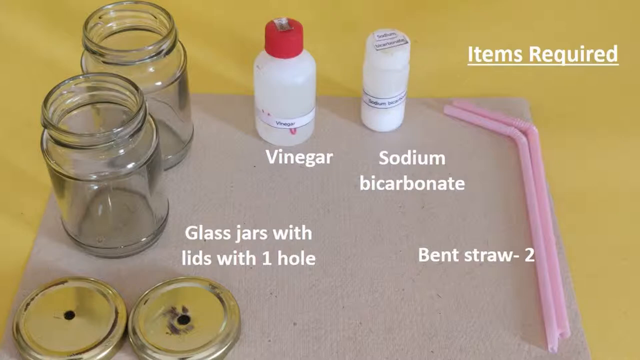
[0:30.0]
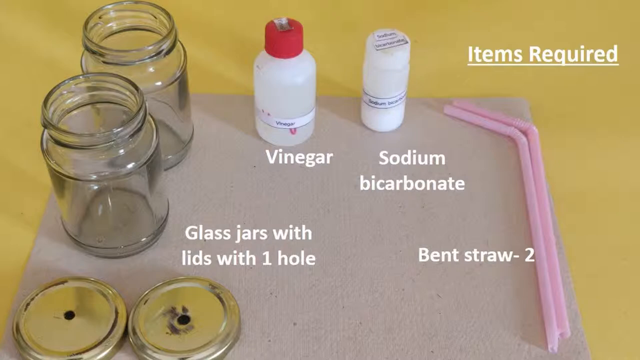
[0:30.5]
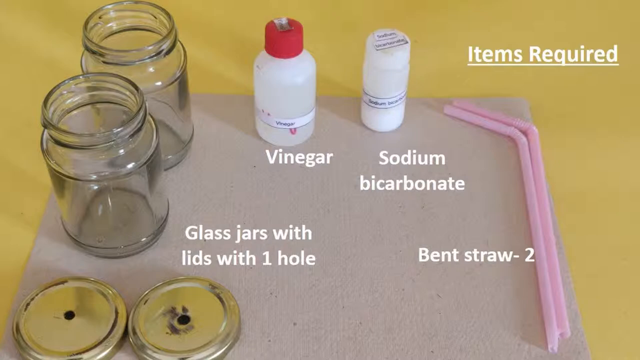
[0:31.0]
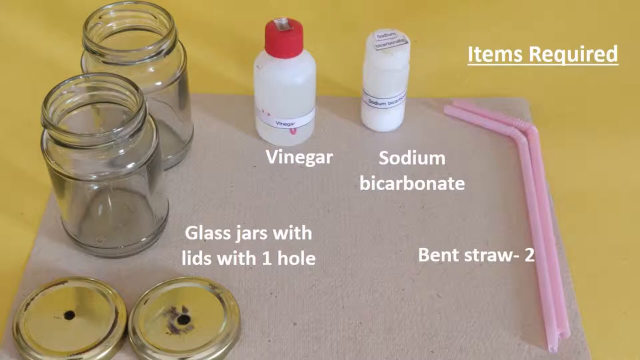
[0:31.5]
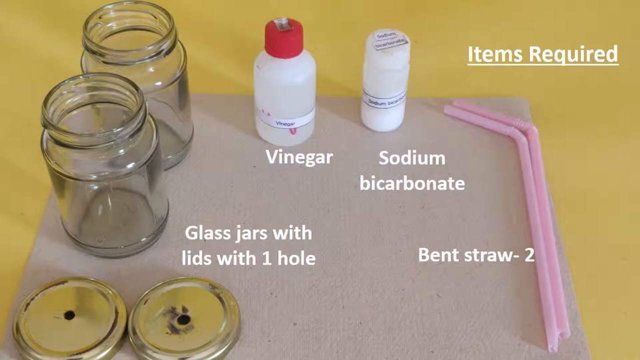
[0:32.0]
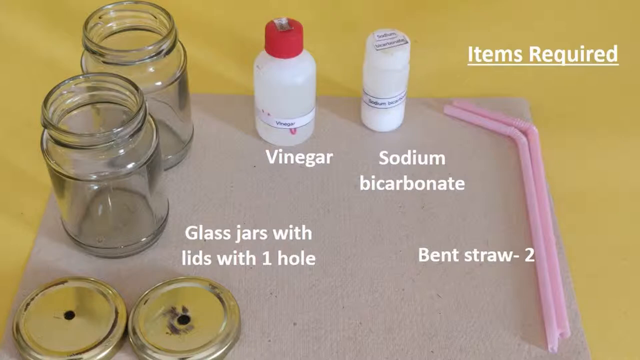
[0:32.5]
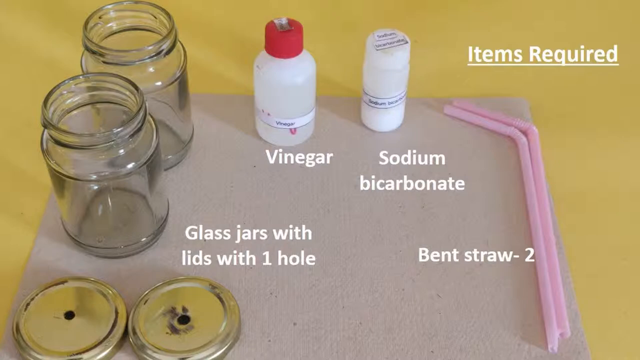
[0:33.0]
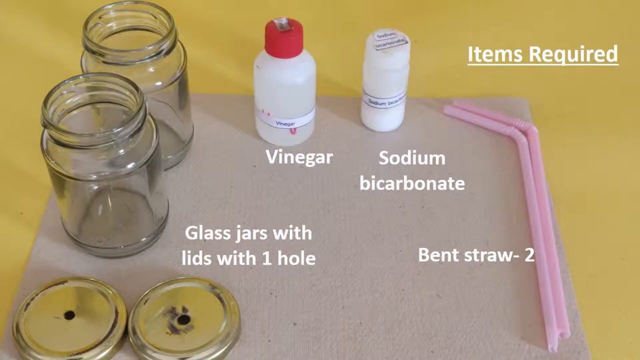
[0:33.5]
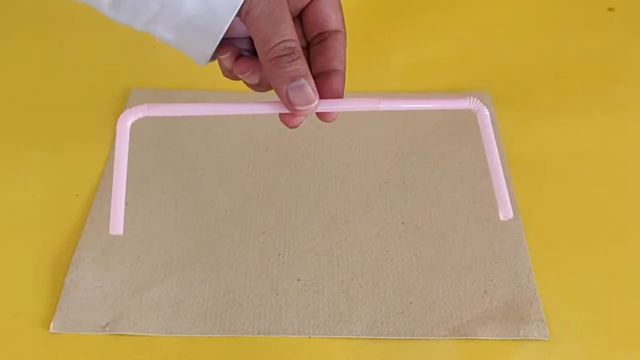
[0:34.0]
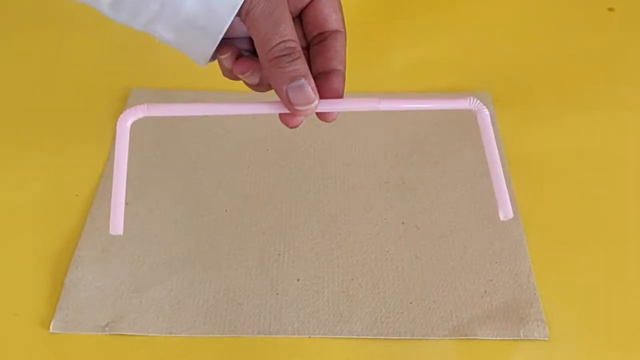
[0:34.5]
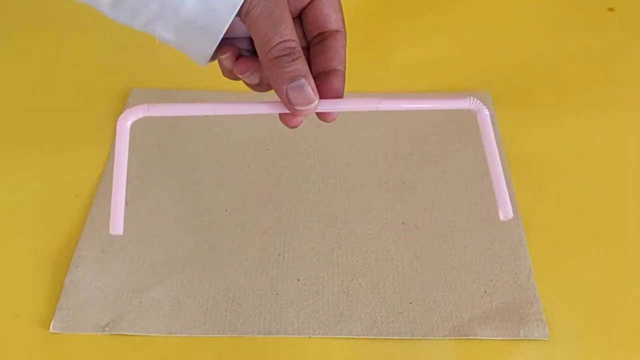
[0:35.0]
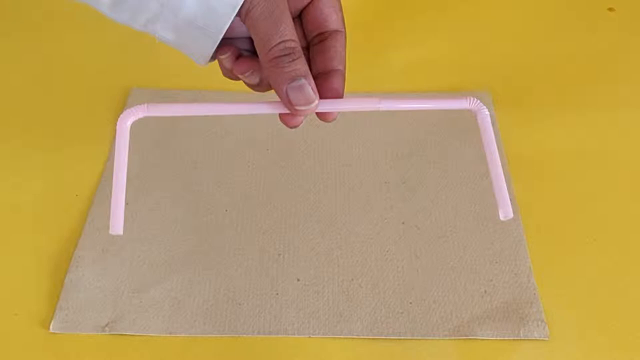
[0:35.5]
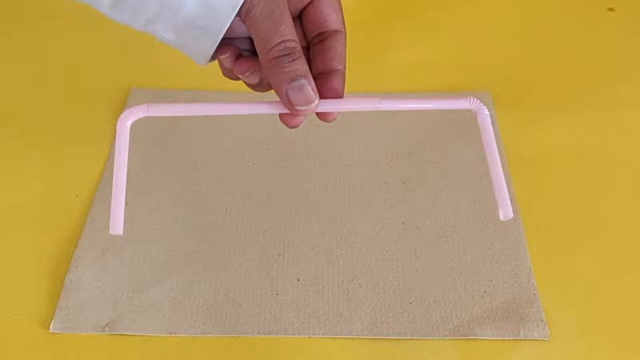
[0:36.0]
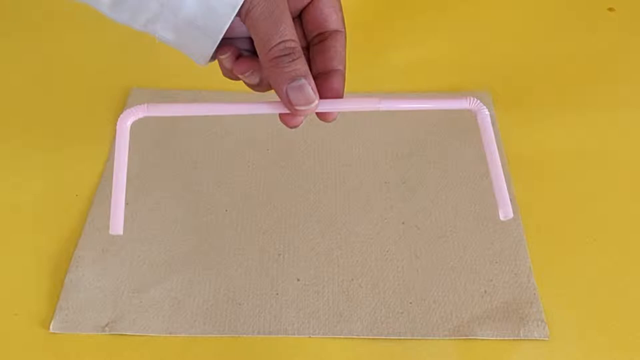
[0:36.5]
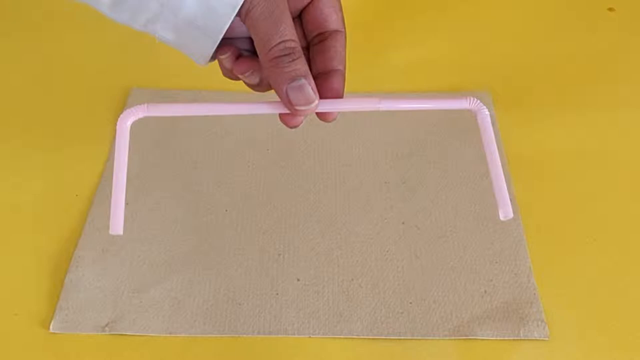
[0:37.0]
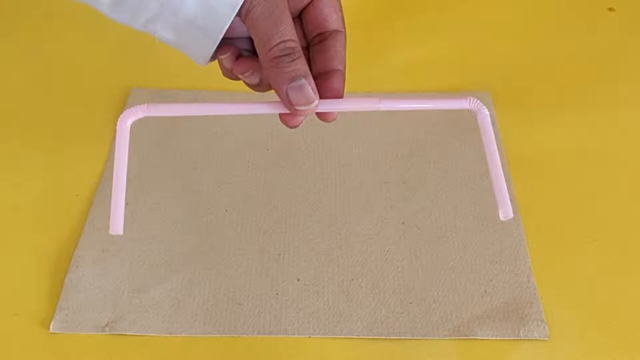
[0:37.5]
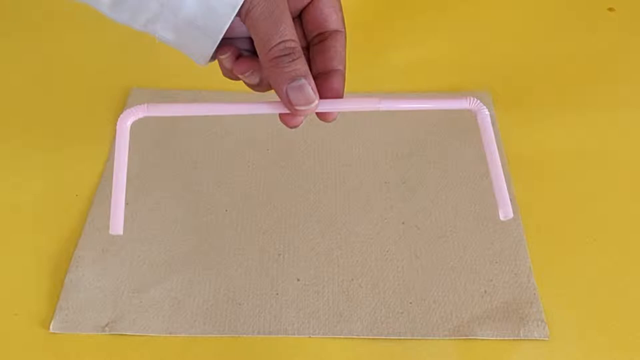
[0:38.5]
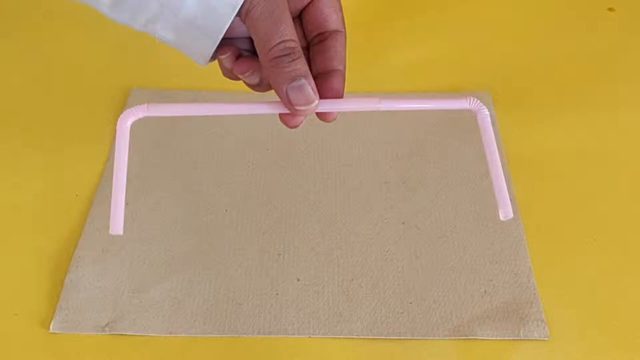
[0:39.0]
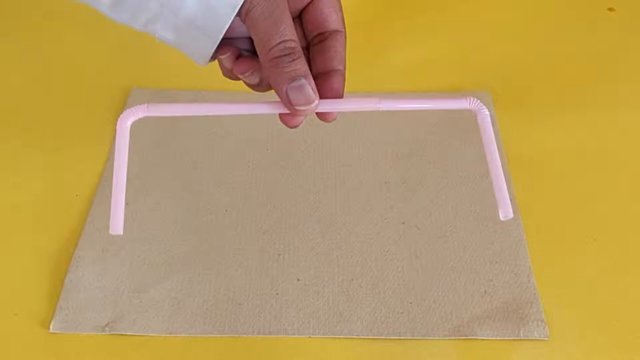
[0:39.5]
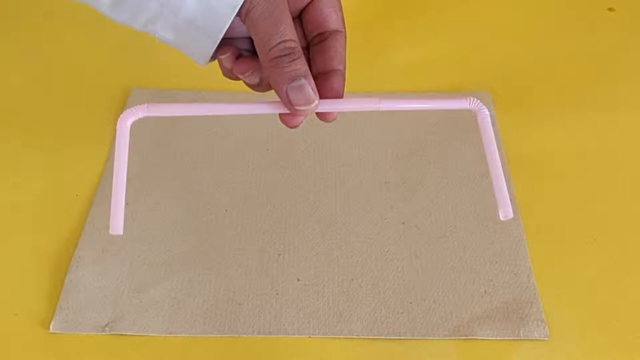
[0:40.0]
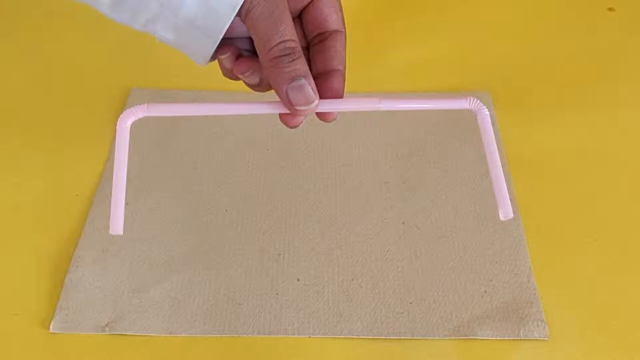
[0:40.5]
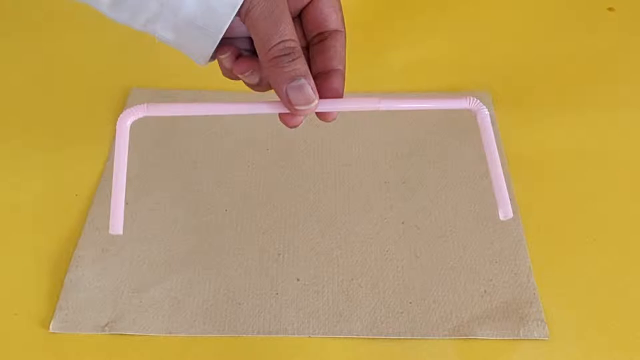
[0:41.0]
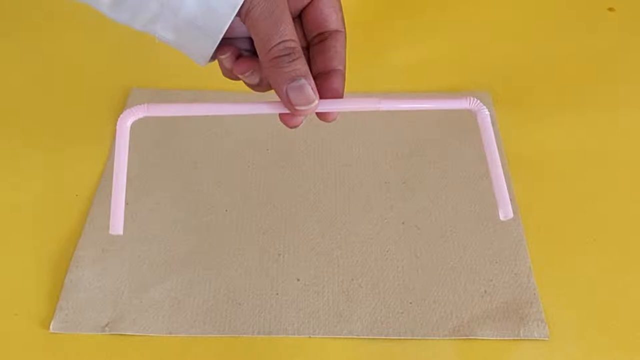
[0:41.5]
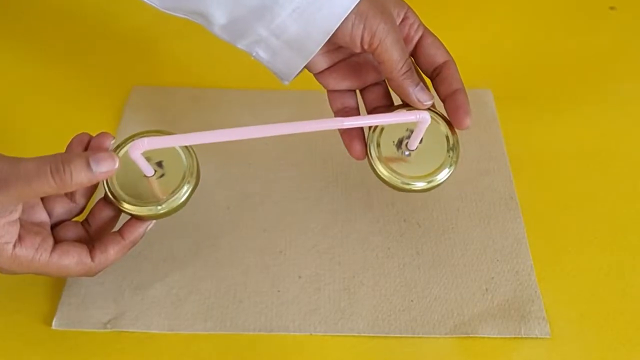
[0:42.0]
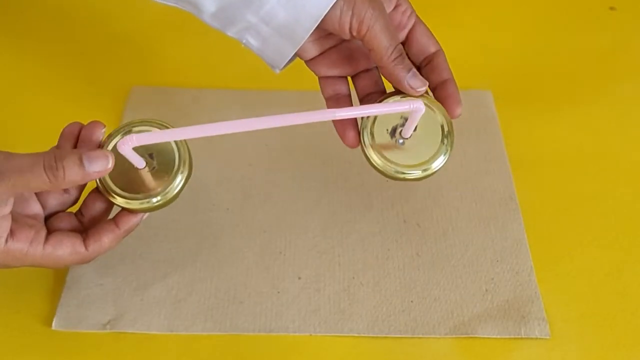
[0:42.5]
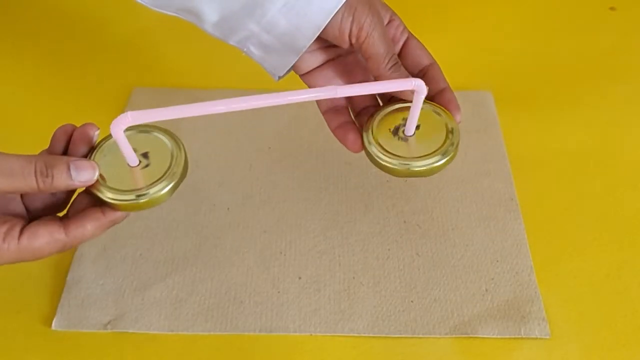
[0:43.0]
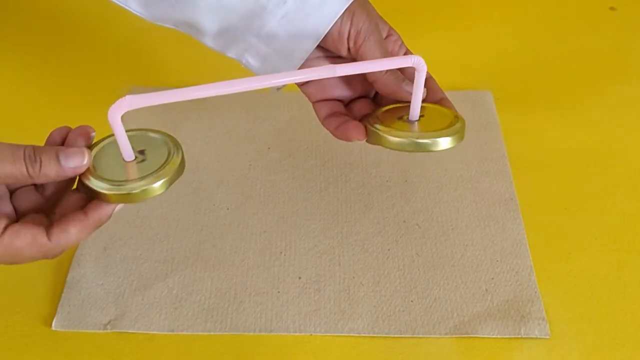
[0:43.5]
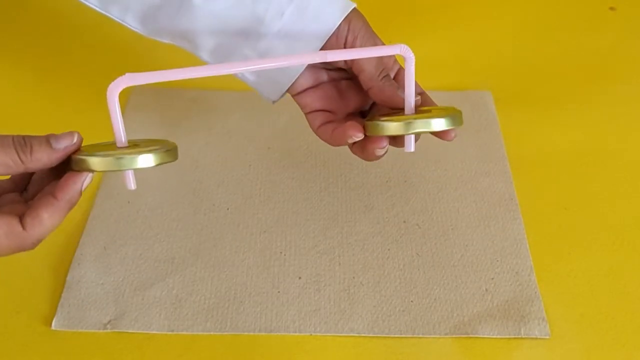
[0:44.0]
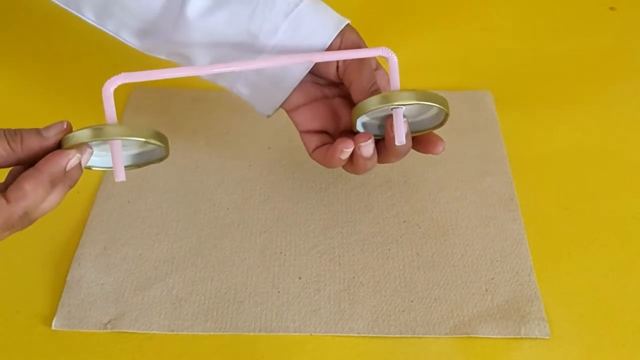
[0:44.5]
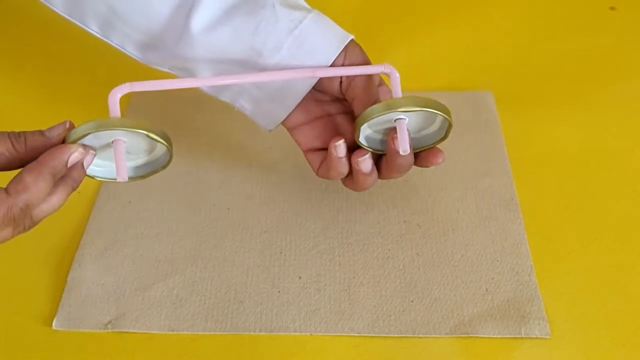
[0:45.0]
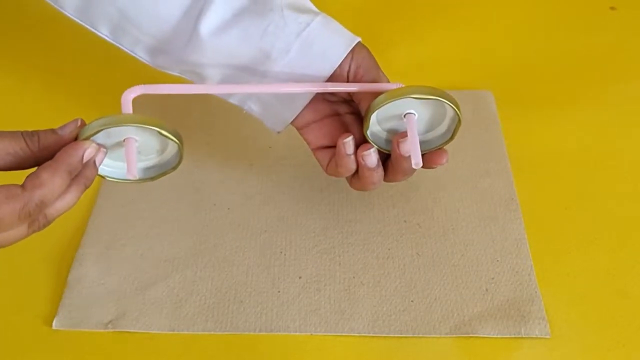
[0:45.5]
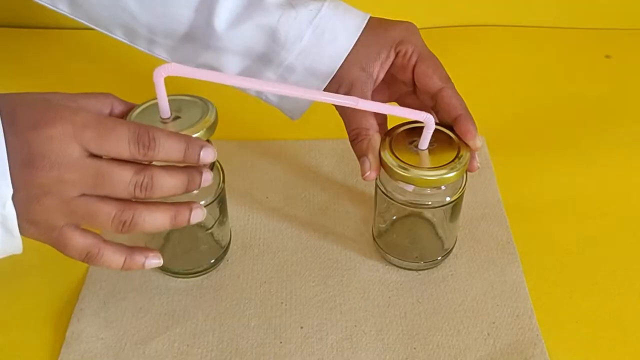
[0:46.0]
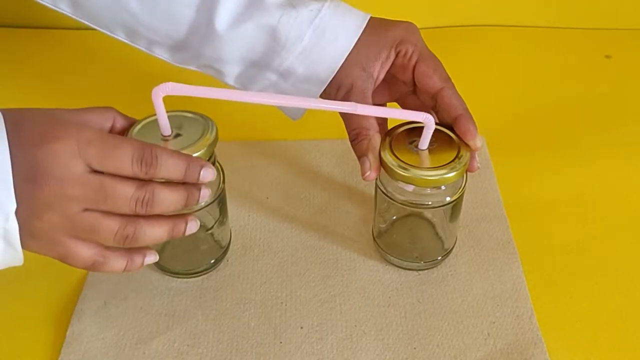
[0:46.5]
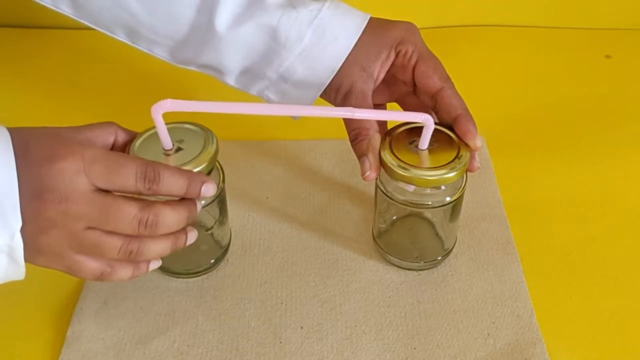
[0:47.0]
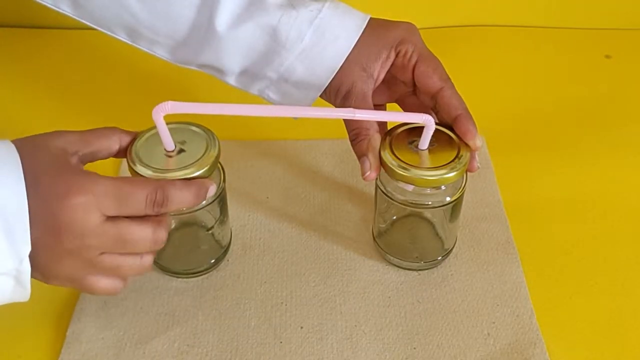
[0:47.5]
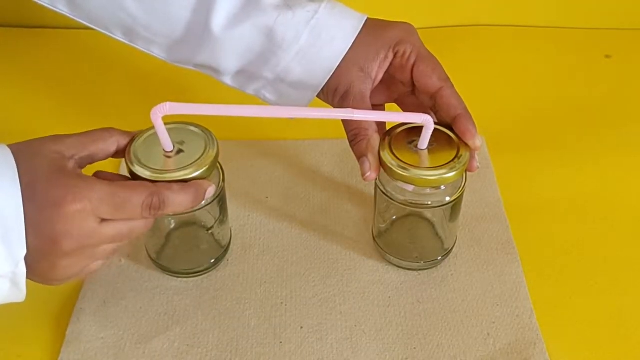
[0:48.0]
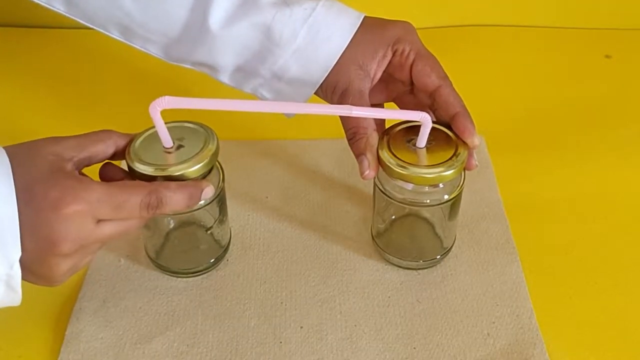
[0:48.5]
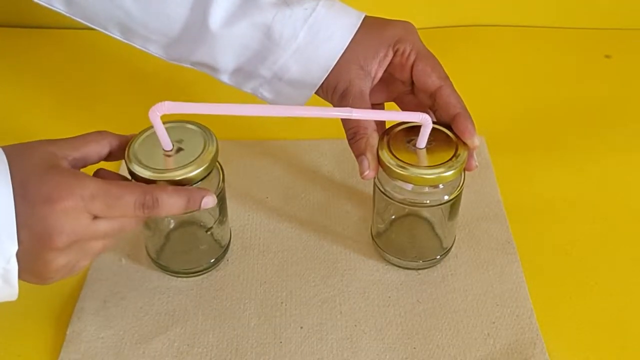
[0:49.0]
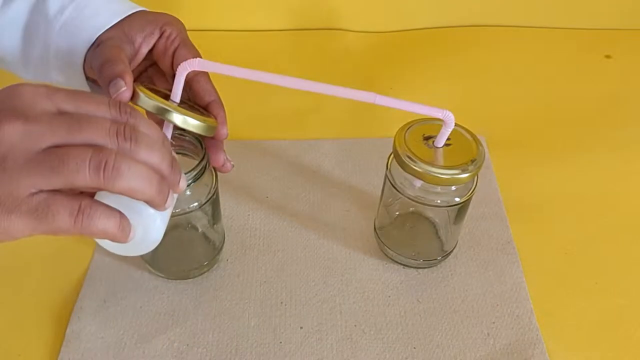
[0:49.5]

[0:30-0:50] The tools for the science experiment are laid out: two bendy straws, the sodium bicarbonate, the vinegar and the glass jars with holes in them. The two bendy straws are connected in the middle, though it is unclear whether one is put inside the other or they are taped; either way they form a semi-square shape. Both ends seem to be put into the tops of the mason jars, so the connected straws sit in the two mason jar lids. The lids are screwed back onto the jars, and one of the liquids seems to be dropped into one of the jars, possibly the vinegar. A scientist seems to be holding the mason jars together; they wear a white scientist coat and have darker skin against a yellow background, apparently the desk where the experiment is done.